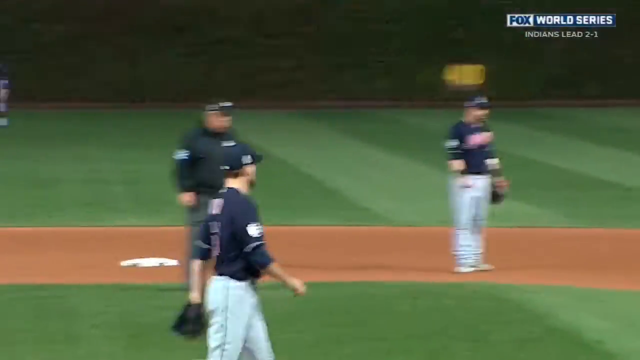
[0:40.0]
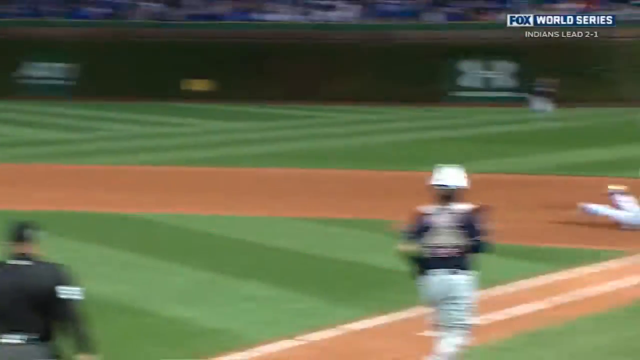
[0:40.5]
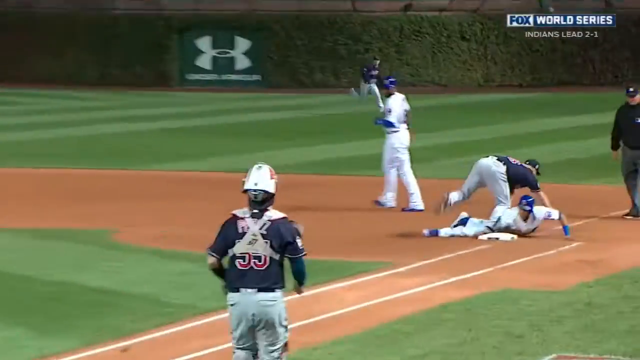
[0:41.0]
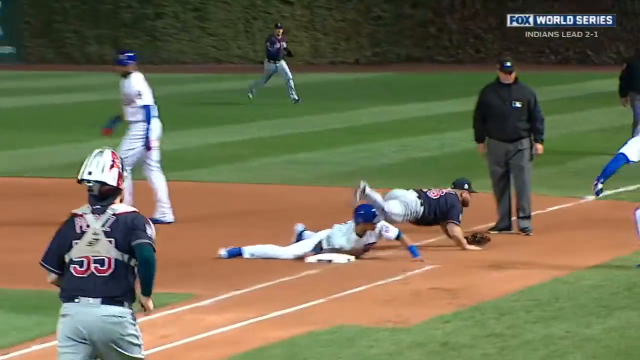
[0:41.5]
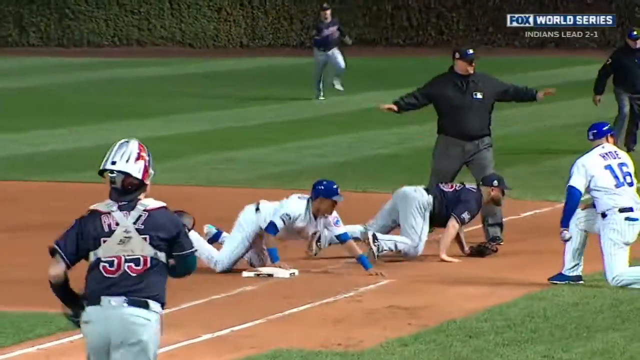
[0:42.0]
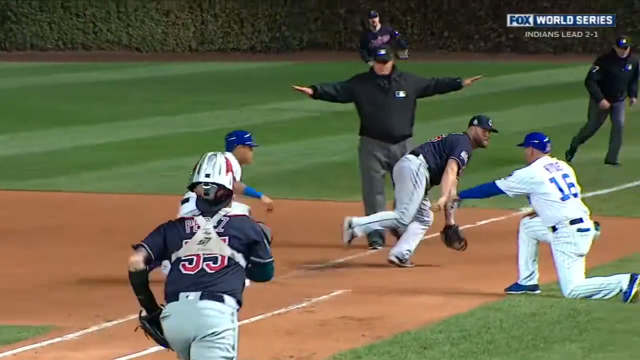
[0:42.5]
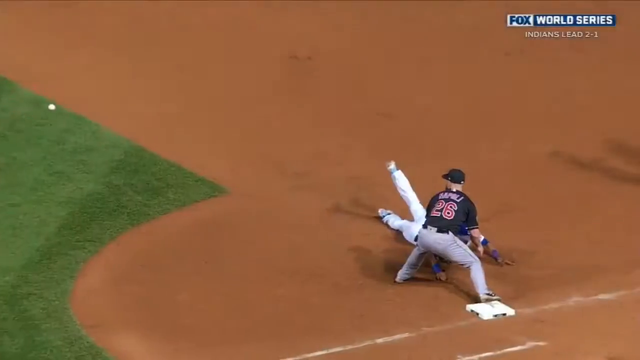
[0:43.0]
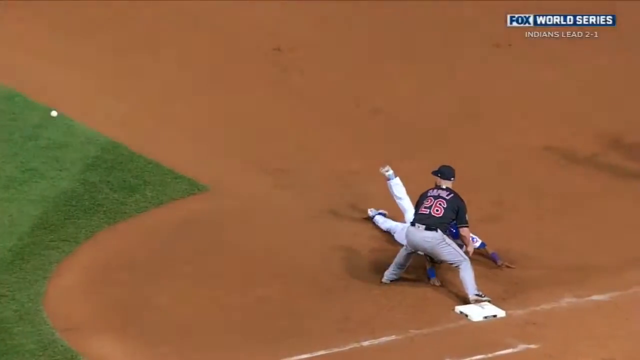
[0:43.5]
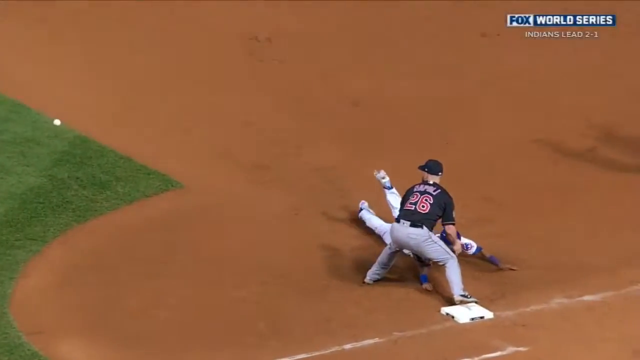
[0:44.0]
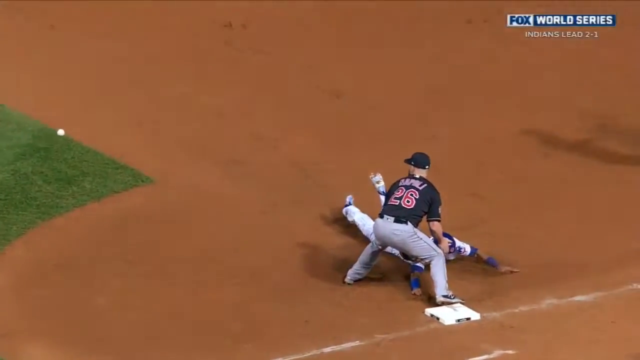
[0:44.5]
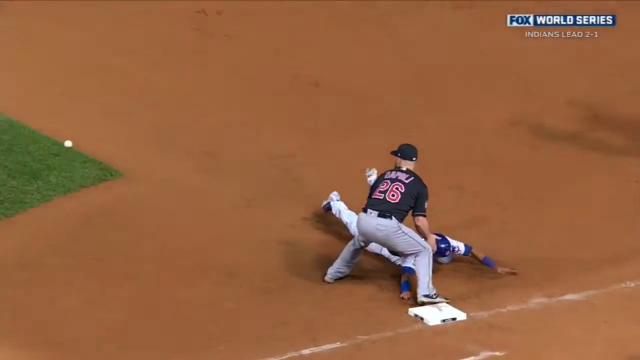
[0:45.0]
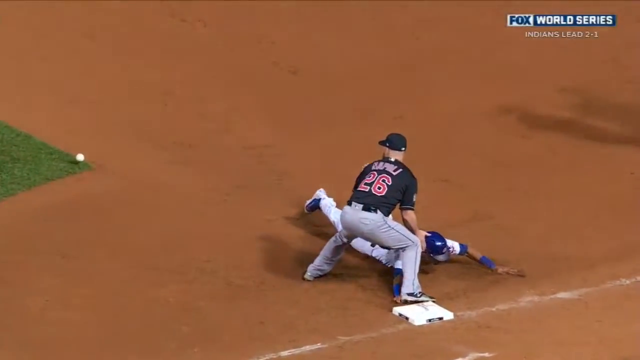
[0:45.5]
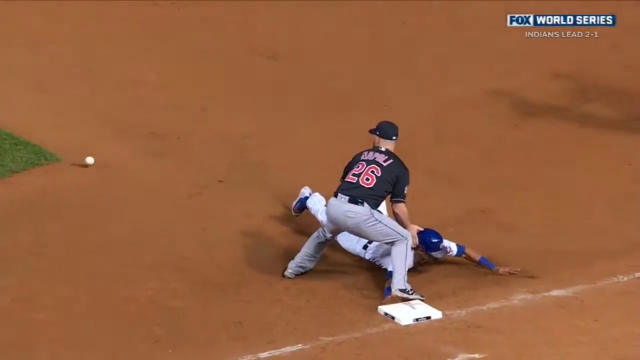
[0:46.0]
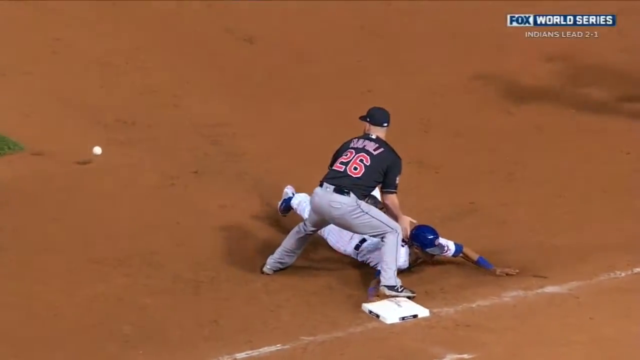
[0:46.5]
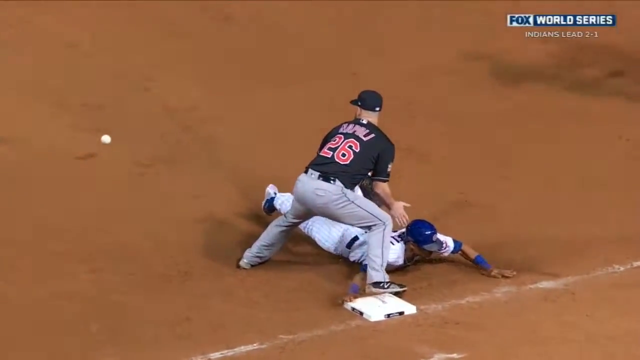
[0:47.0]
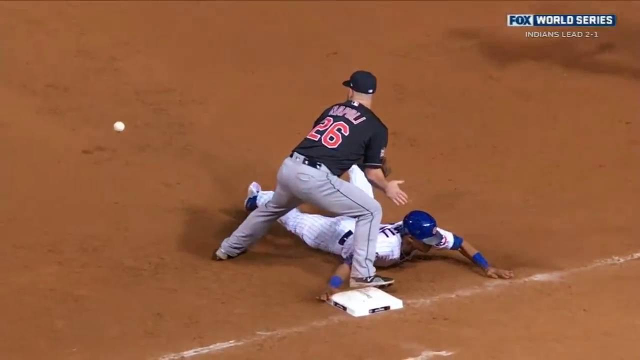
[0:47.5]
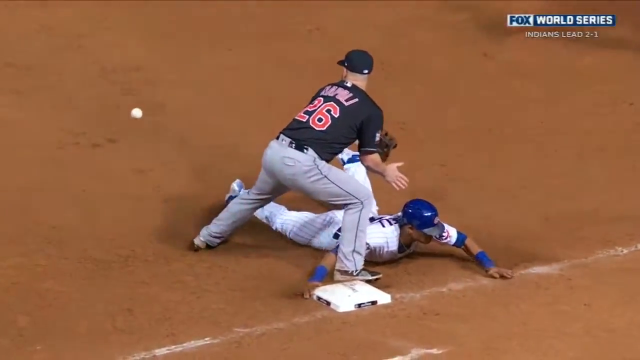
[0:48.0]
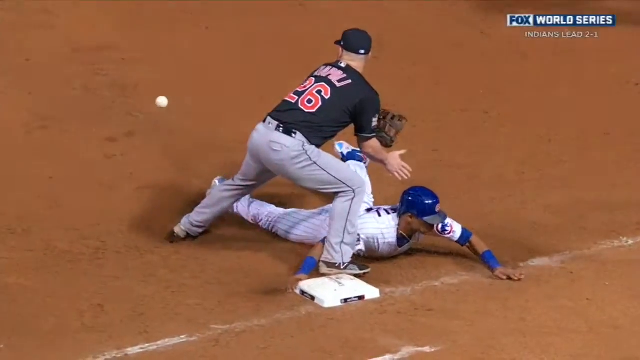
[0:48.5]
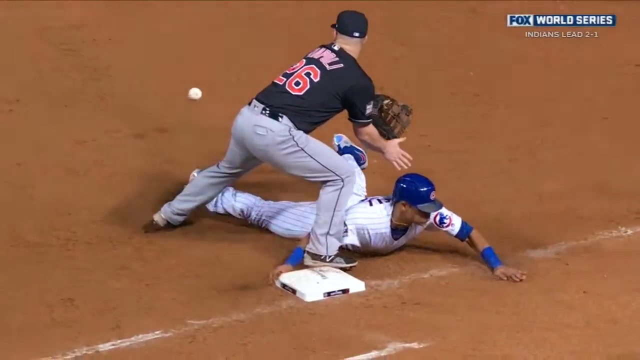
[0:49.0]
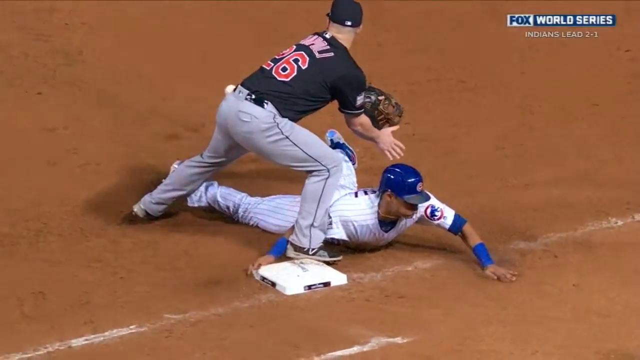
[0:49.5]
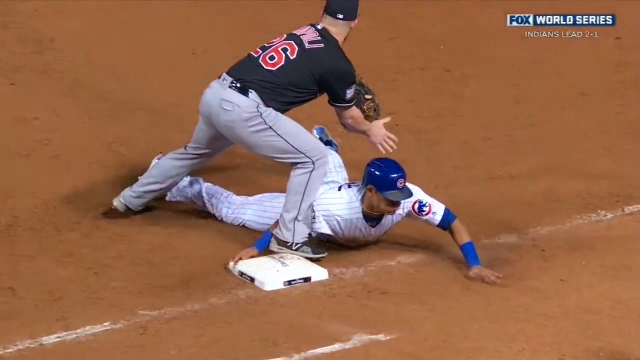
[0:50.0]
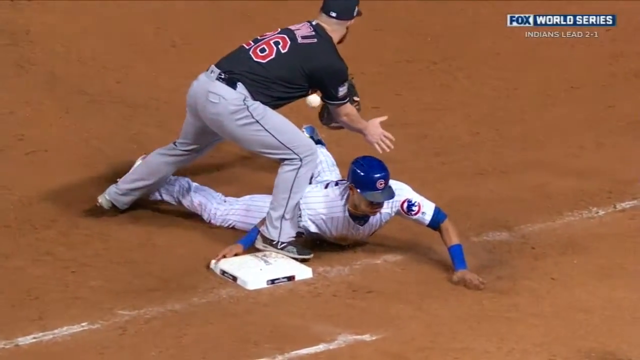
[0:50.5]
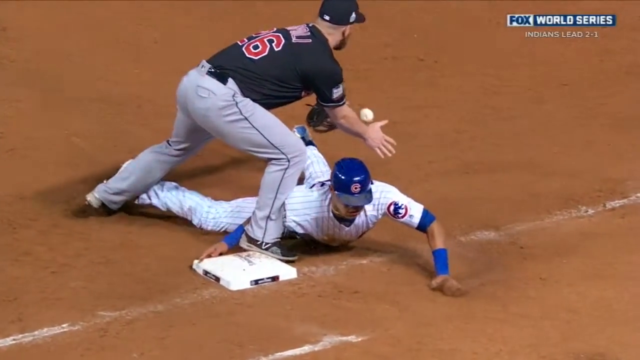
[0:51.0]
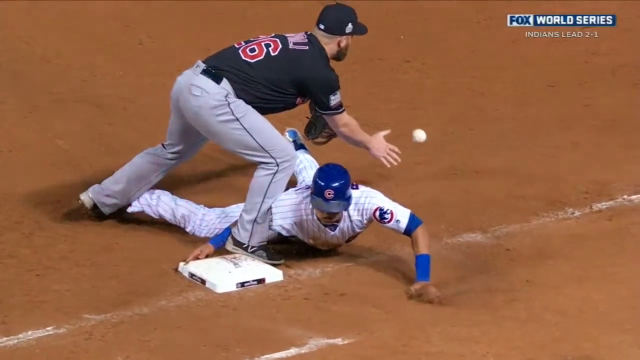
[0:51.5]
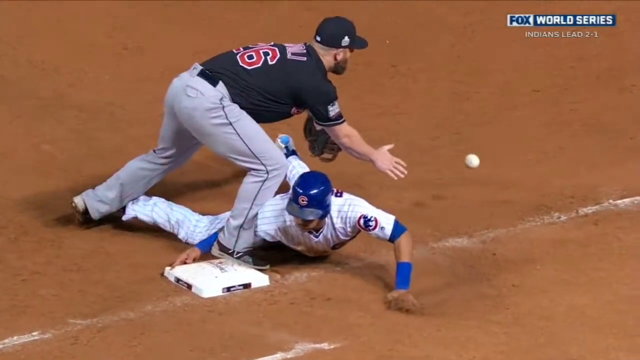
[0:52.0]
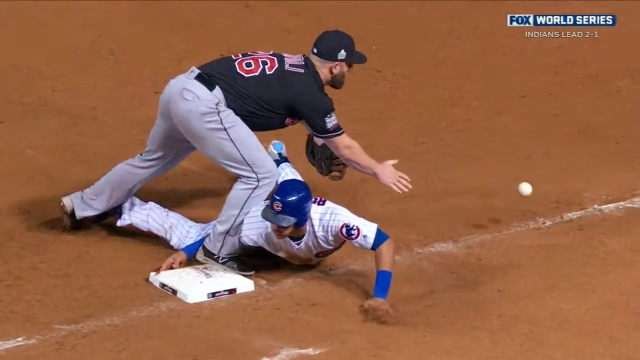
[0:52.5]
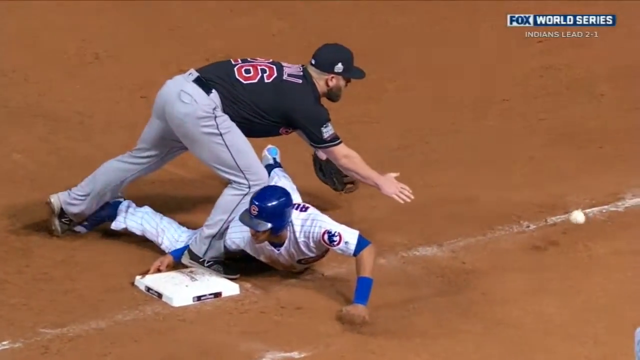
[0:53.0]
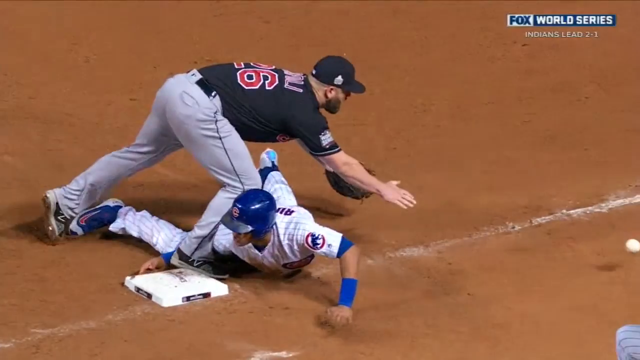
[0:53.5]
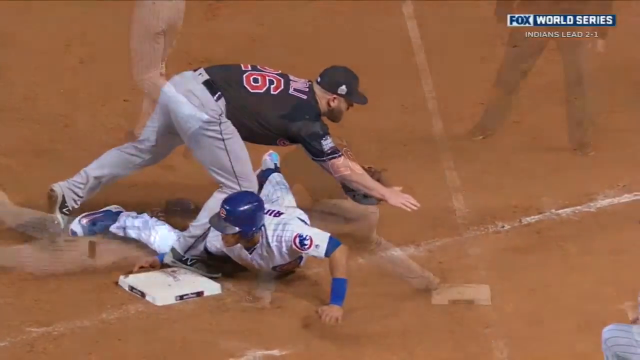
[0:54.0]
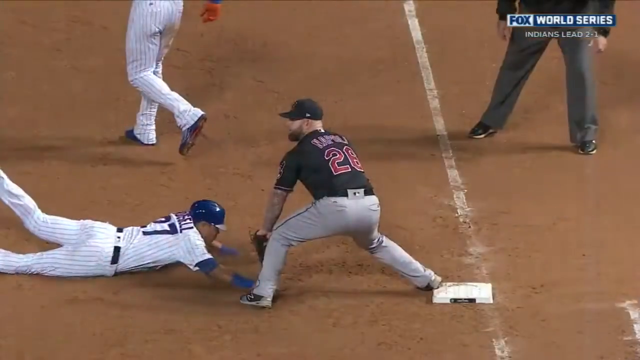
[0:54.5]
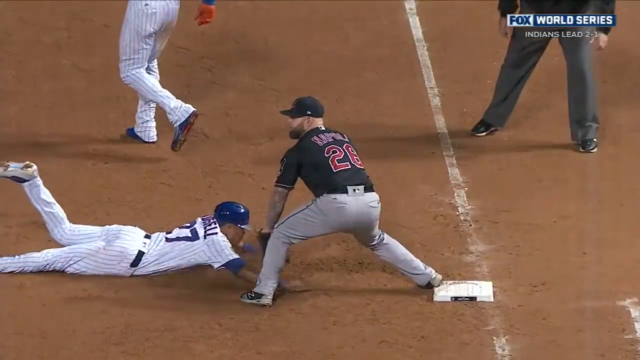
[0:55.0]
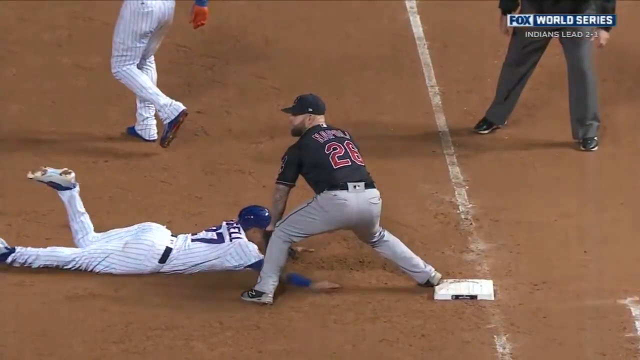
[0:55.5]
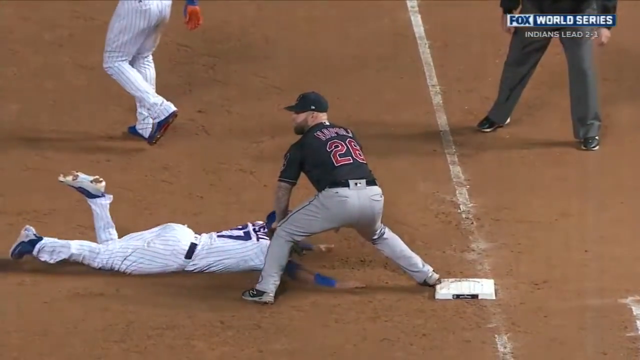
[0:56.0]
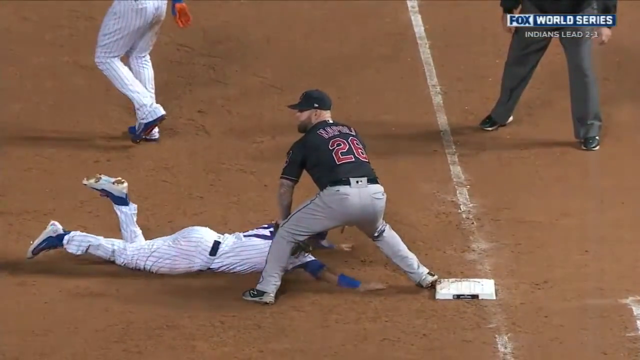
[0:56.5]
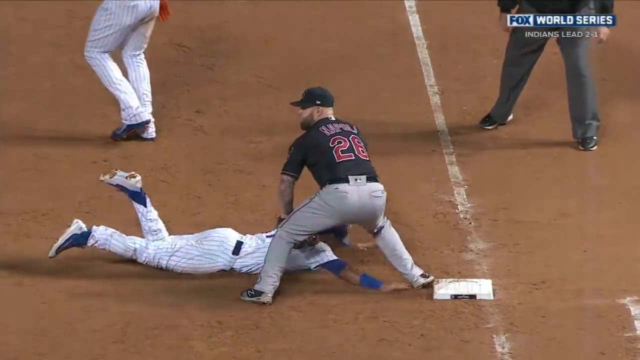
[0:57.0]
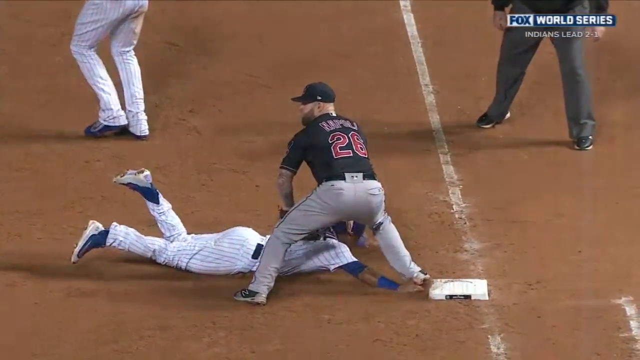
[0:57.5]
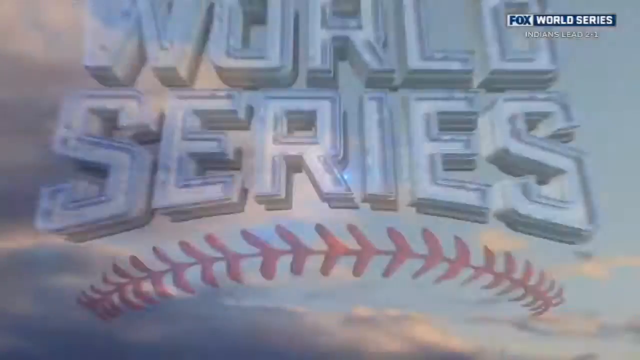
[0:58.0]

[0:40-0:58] A replay shows a player touching the base as the ball passes through them, with another player tripping on them. It then switches to a slow-motion version of the play in which the baseball slowly approaches the players. A player in a blue shirt and grey pants with the number 26 on their shirt and a black hat tries to catch the ball, while another player in a white shirt and pants with light blue stripes, a blue cap and decorative blue tape on their hands tries to reach the base before the other player catches the ball. Because this player slid there, the player above stumbles on them and slowly falls down, unable to catch the ball. The camera then changes, showing the same slow-motion play from another perspective.